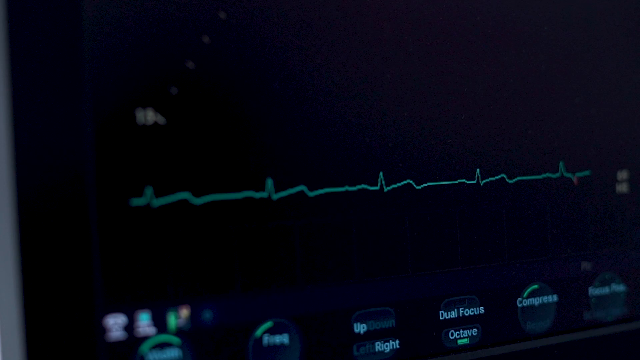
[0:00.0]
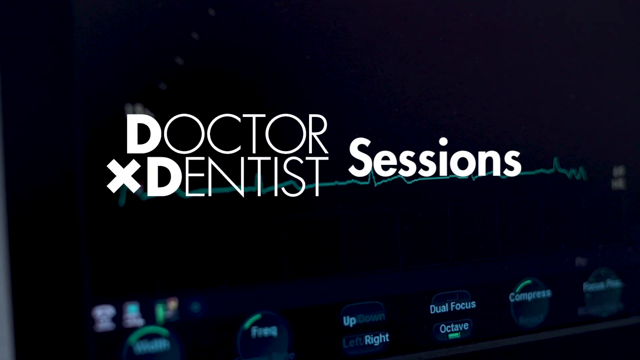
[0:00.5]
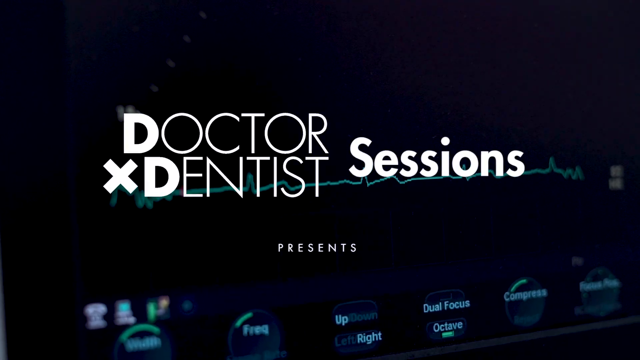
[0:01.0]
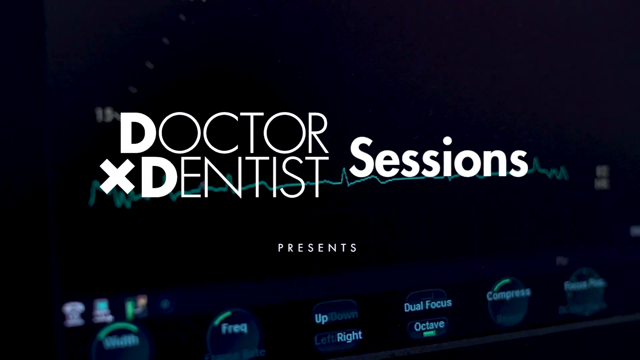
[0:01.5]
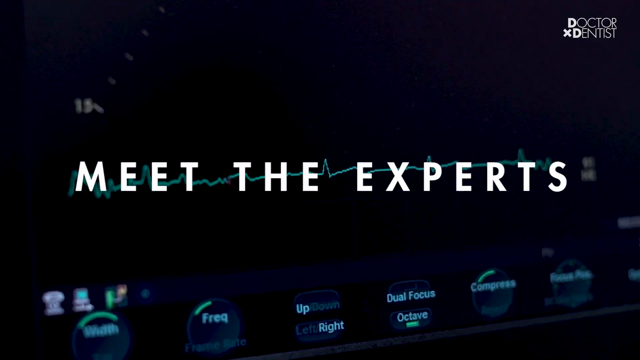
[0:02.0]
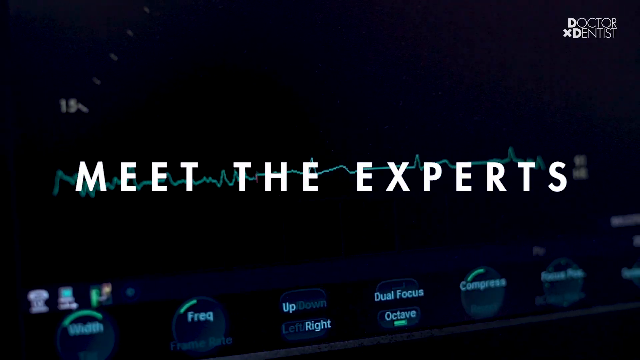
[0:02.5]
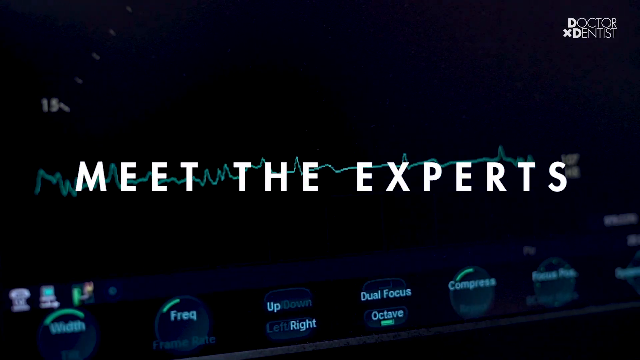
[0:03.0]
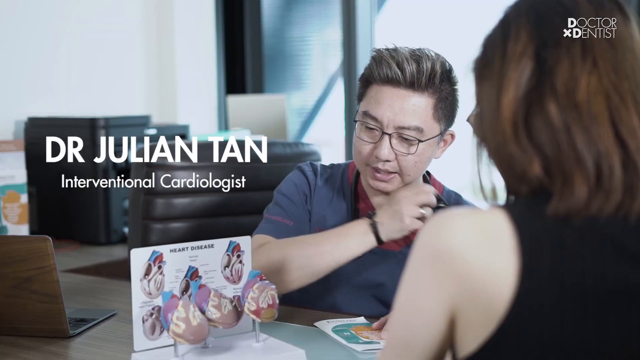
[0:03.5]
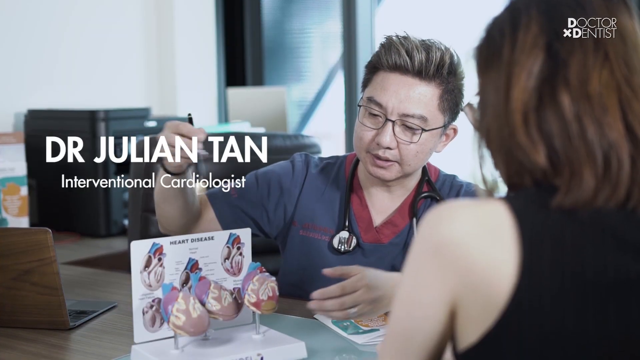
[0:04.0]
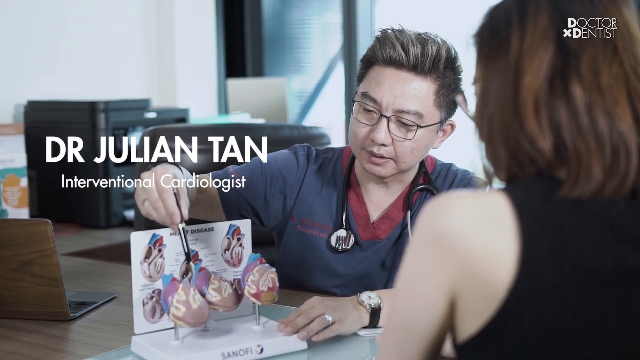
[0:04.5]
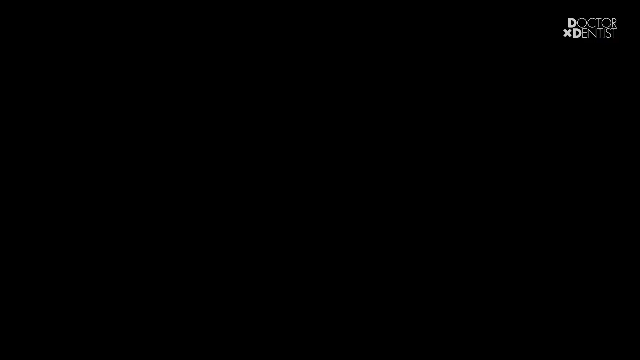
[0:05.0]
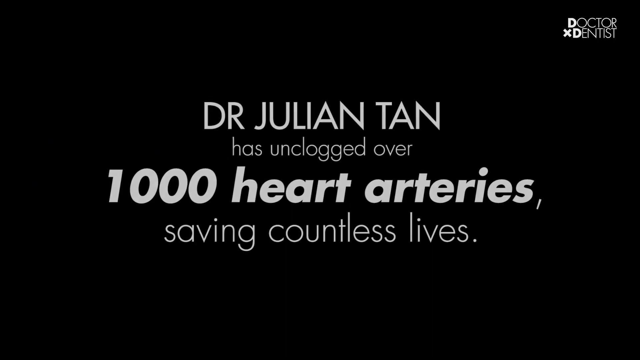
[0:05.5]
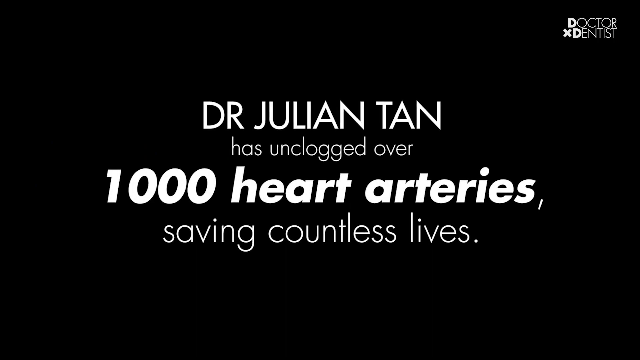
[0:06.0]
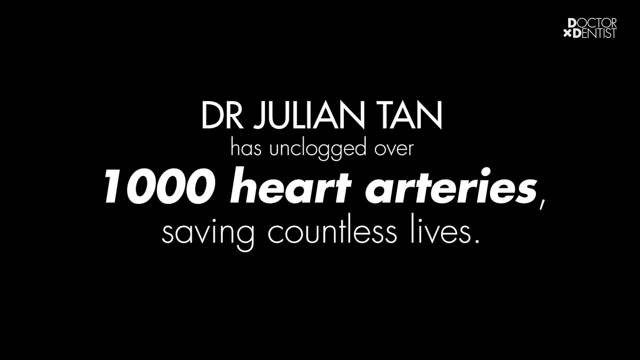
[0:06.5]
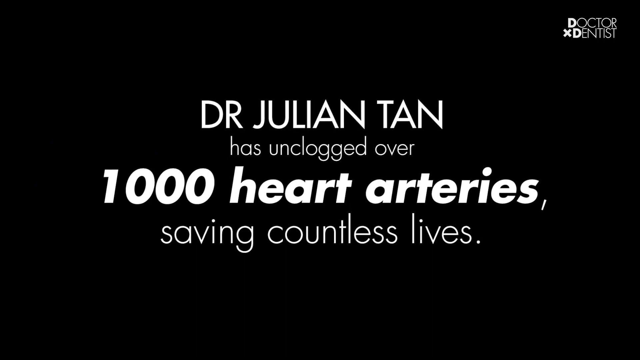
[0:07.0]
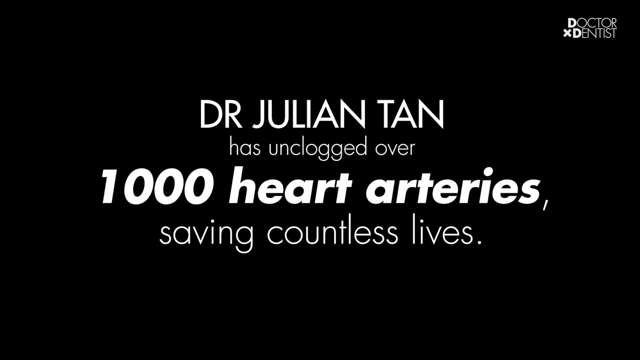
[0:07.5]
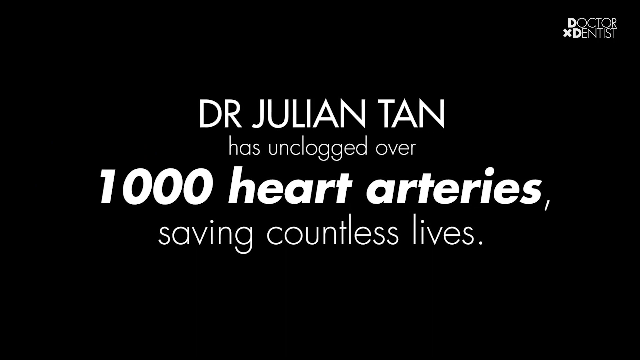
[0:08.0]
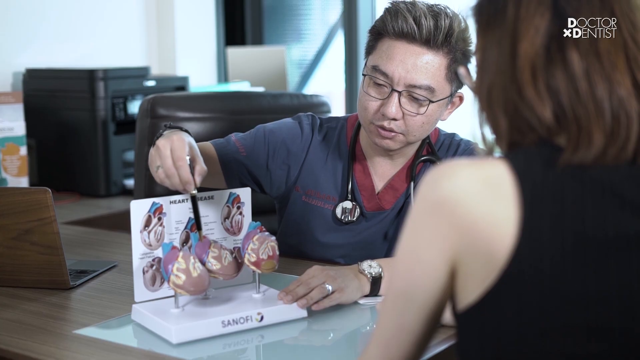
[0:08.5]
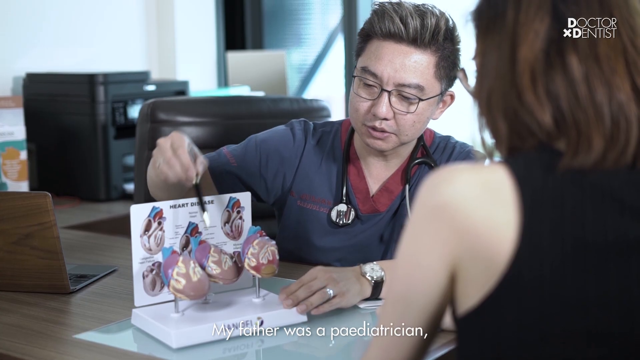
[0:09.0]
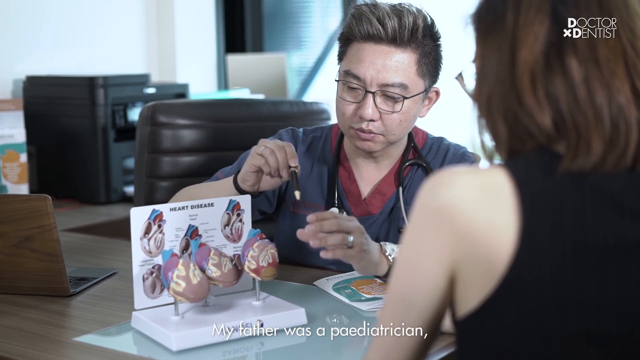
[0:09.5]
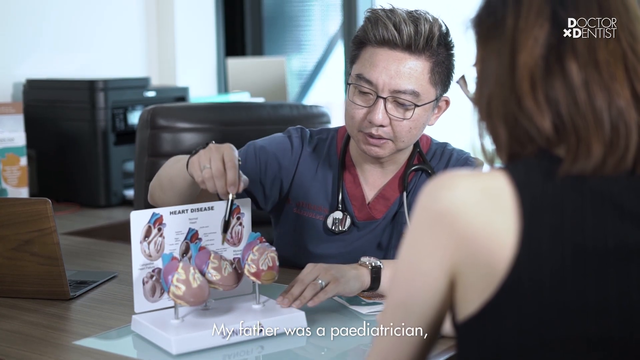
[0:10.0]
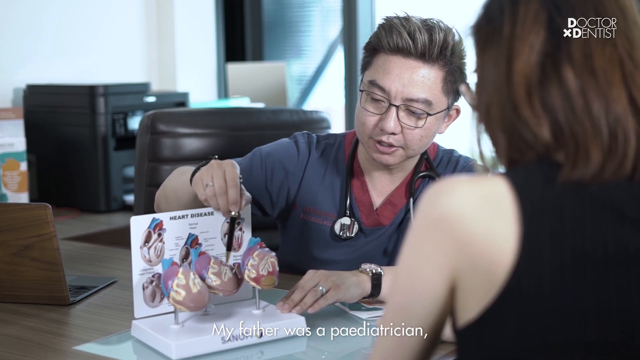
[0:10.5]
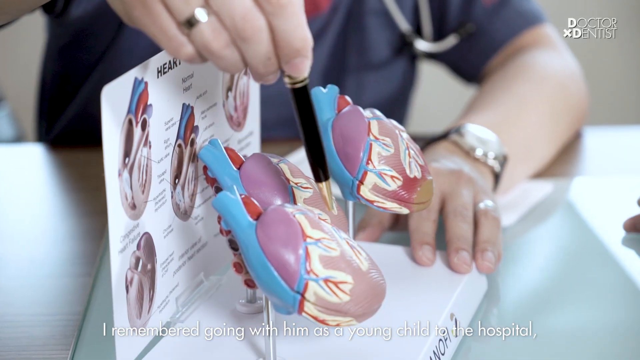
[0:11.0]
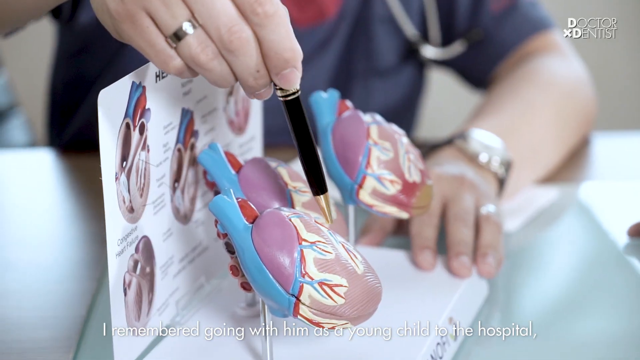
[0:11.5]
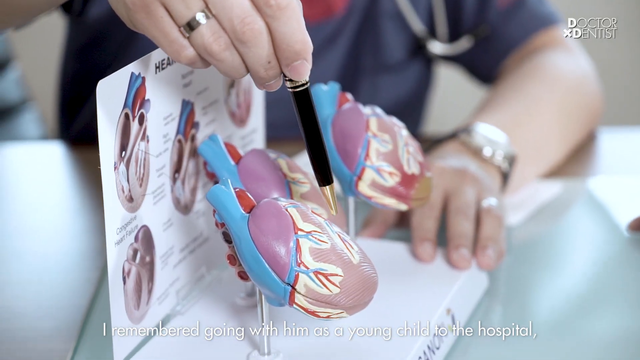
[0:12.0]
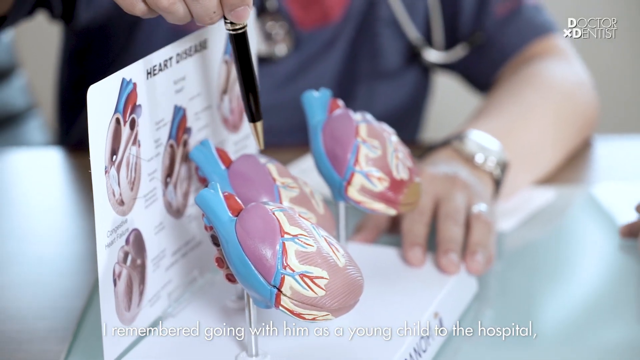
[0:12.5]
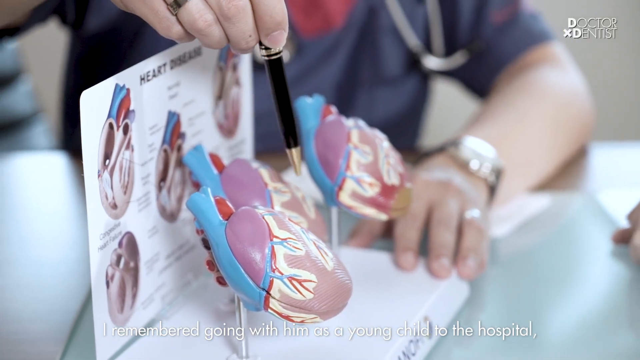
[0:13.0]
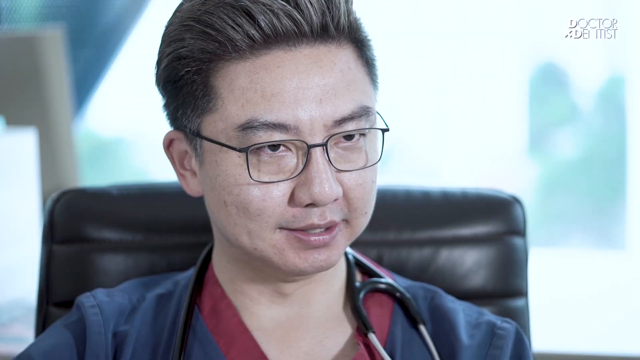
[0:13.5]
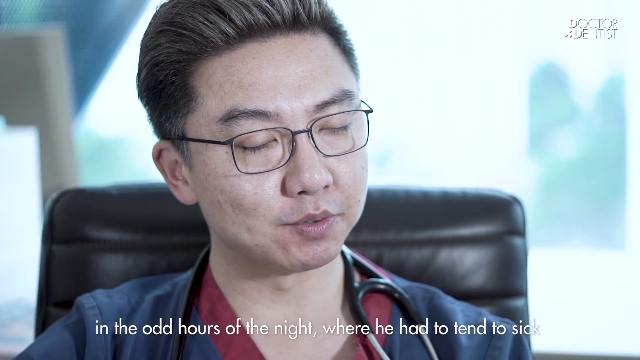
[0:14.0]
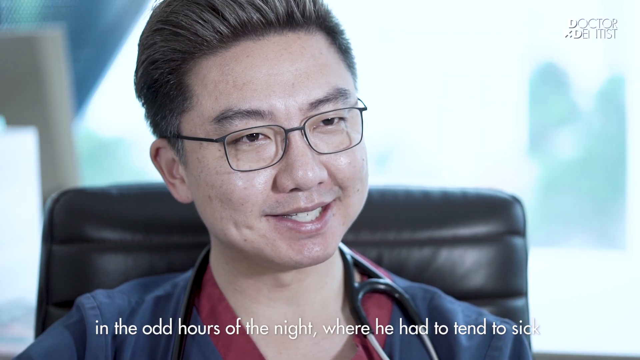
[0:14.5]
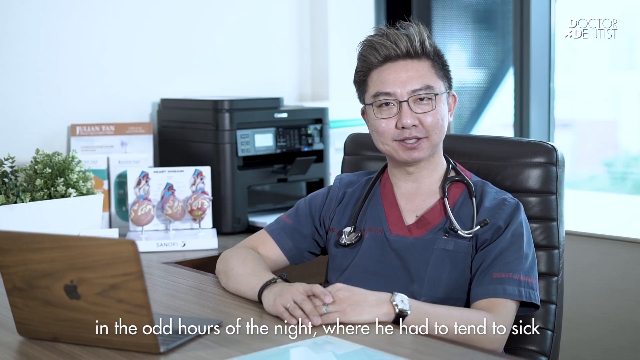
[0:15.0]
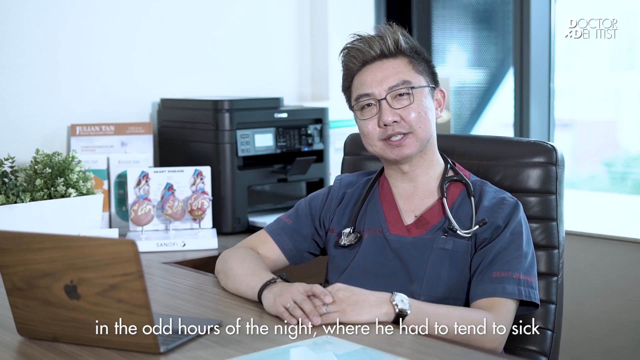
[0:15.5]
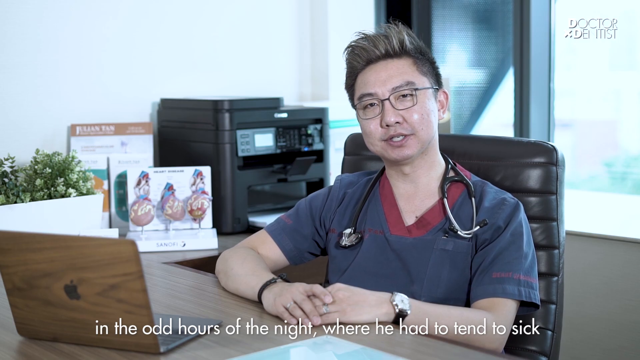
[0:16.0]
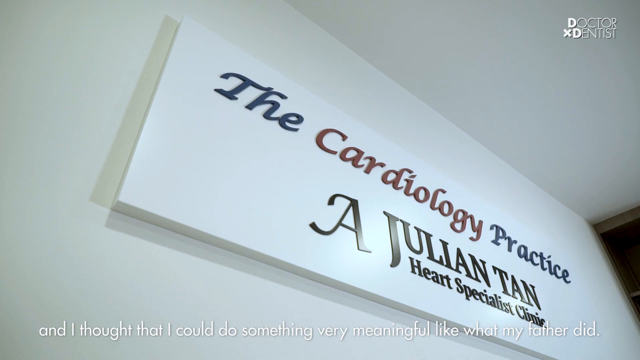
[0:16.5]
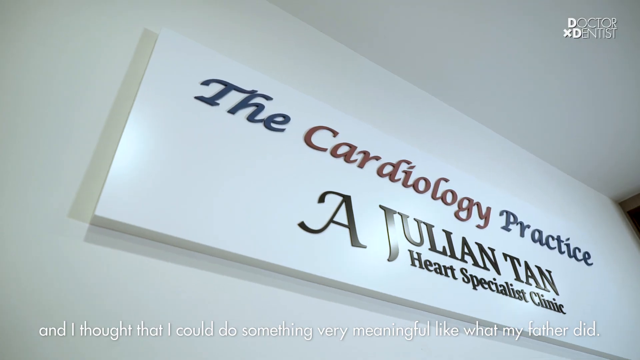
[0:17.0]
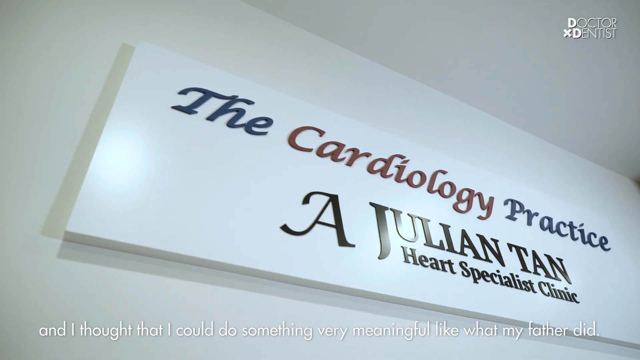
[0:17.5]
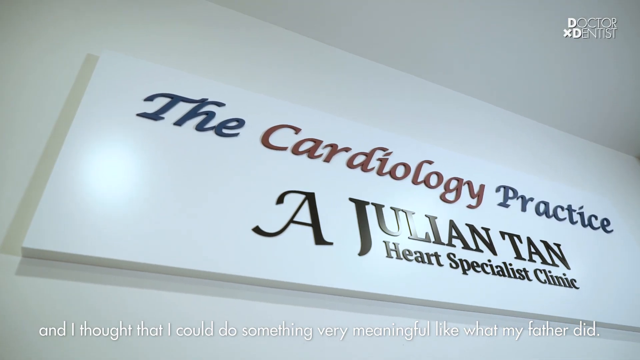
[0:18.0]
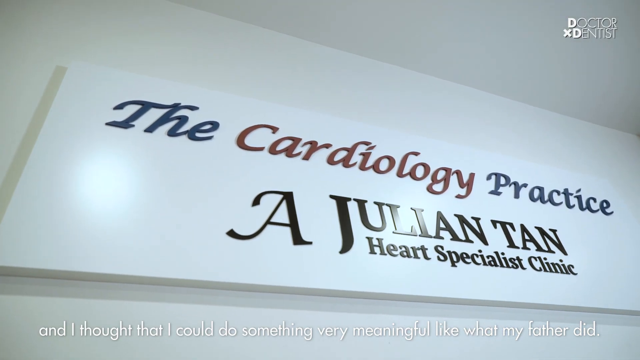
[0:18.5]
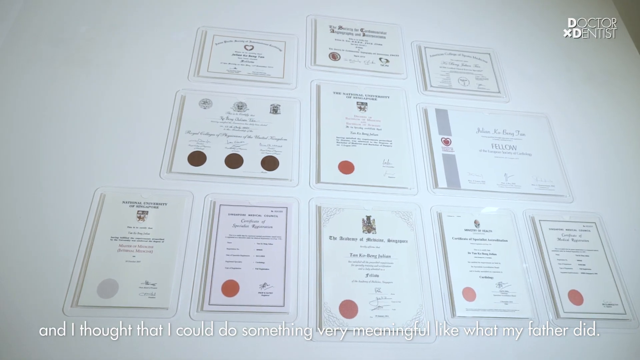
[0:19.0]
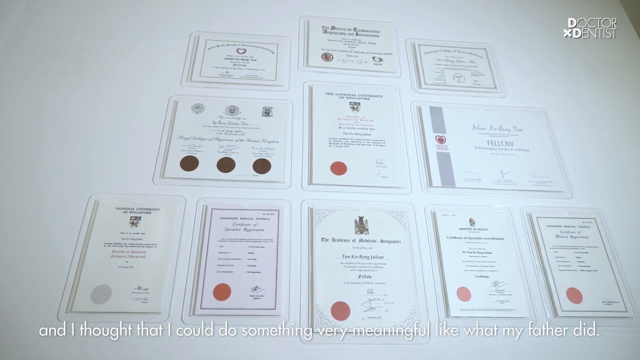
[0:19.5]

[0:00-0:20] Logos at the top of the screen read "Dr. x dentist sessions presents," and the video is titled "Meet the Experts." In the background there is a zigzag lifeline like those seen on medical equipment. The setting looks like a seminar or possibly a medical fair. A woman is talking with a doctor, Dr. Julian Tan, an interventional cardiologist, who points to different pictures in a diagram he is showing her. The video cuts to a subtitle that reads "Dr. Julian Tan has unclogged over a thousand heart arteries saving countless lives." The doctor continues pointing to different parts of the diagram with a pen. Then a sign for his practice appears, reading "a cardiology practice, a Julian Tan heart specialist clinic."